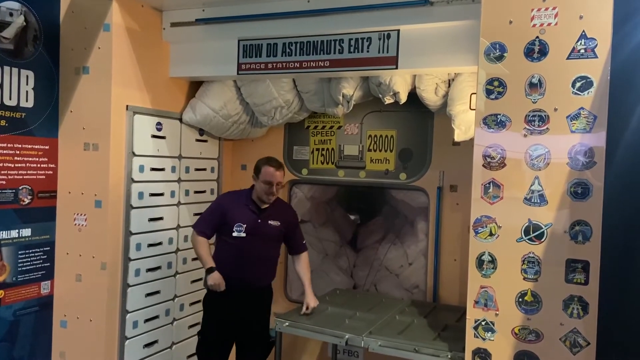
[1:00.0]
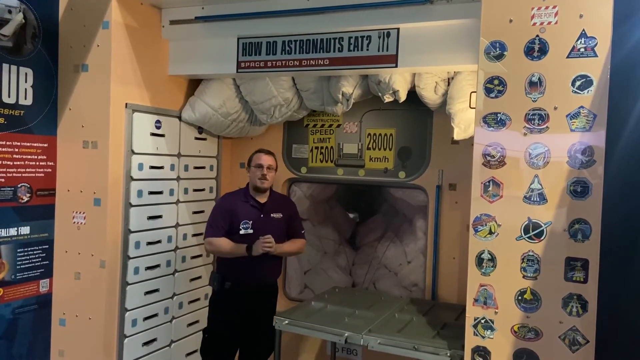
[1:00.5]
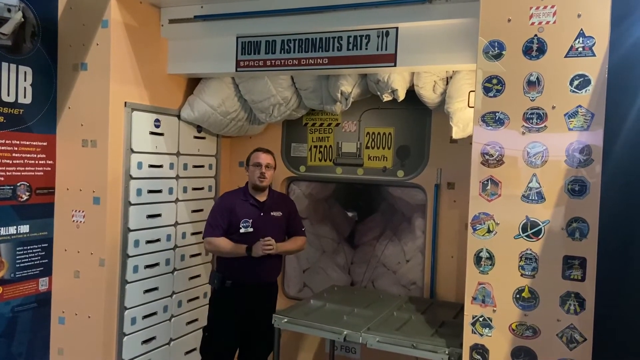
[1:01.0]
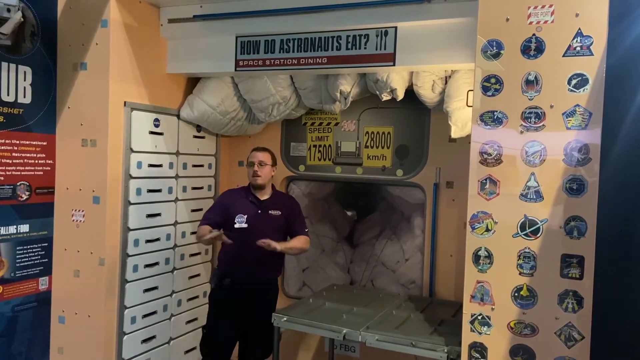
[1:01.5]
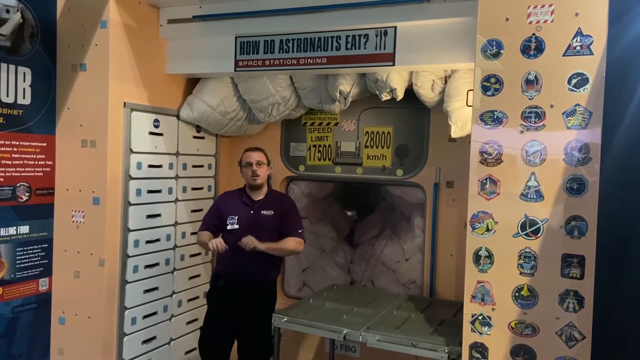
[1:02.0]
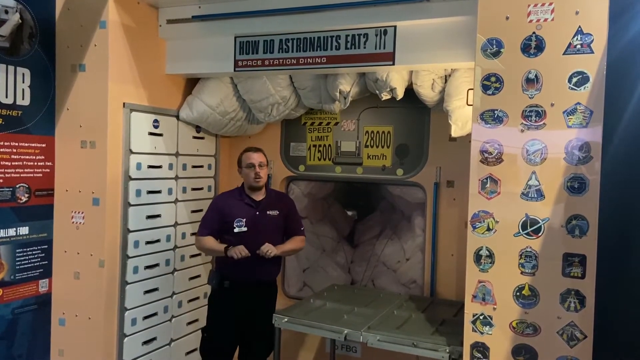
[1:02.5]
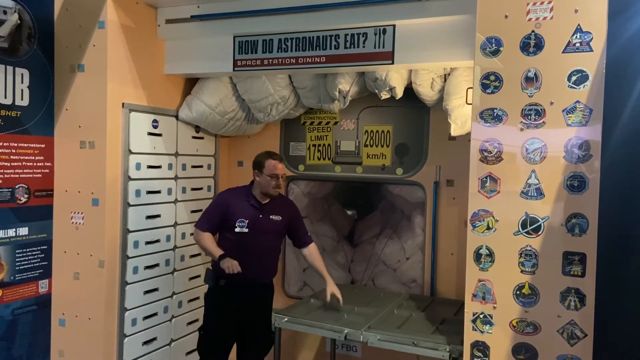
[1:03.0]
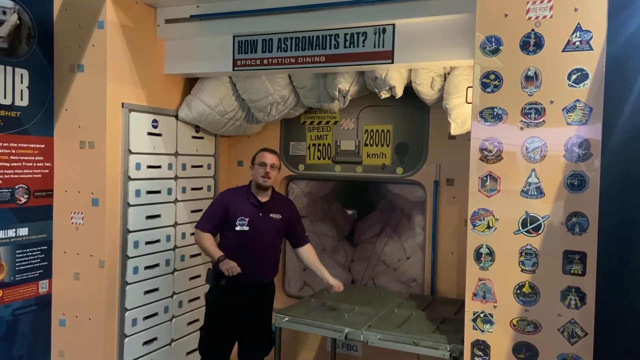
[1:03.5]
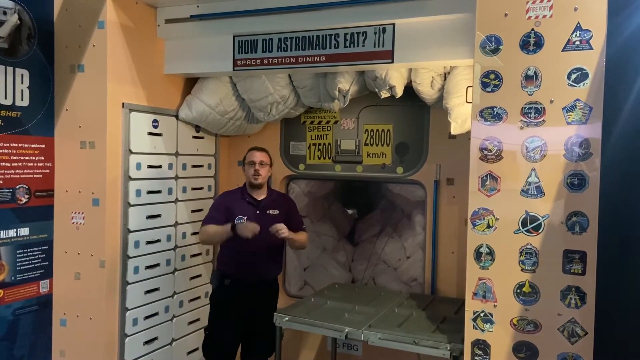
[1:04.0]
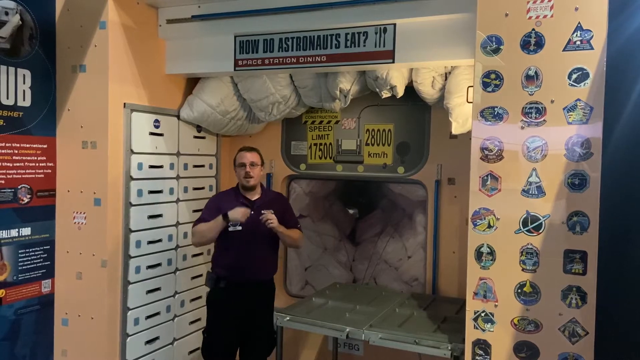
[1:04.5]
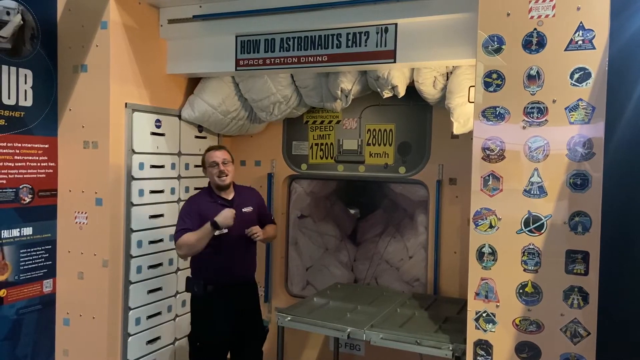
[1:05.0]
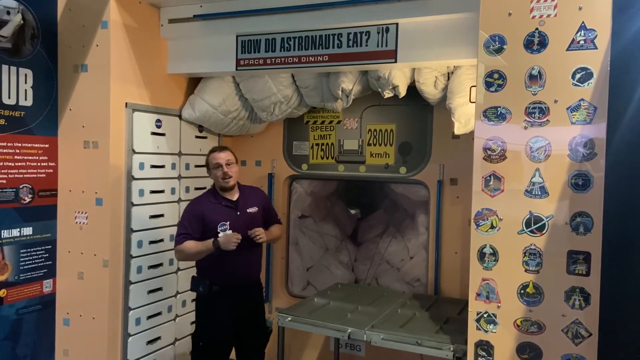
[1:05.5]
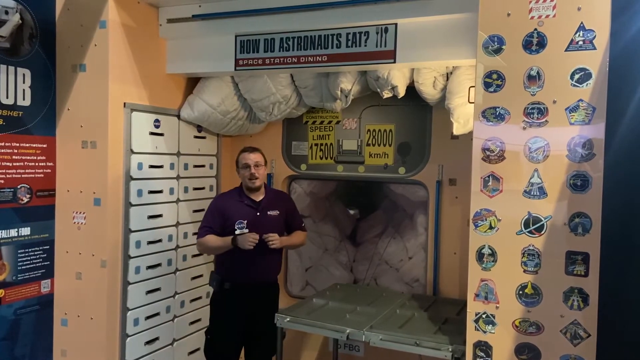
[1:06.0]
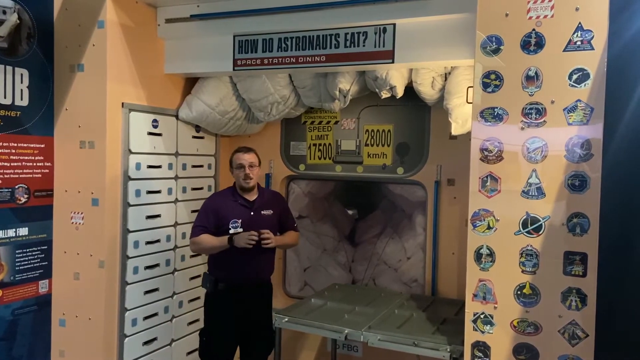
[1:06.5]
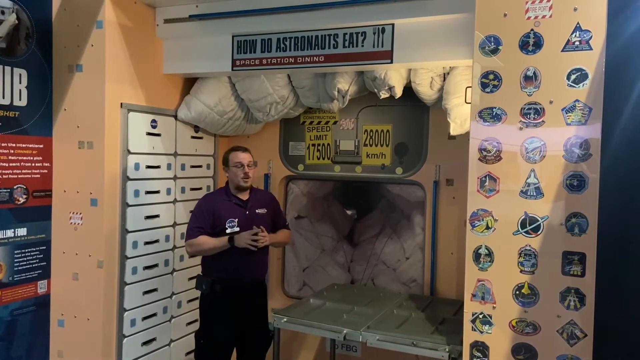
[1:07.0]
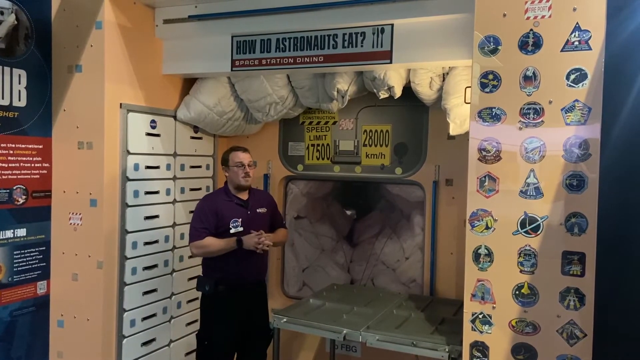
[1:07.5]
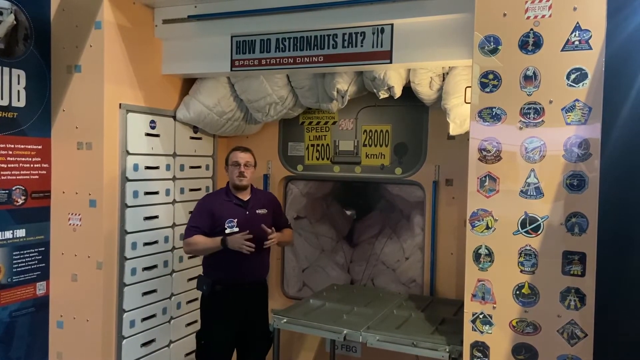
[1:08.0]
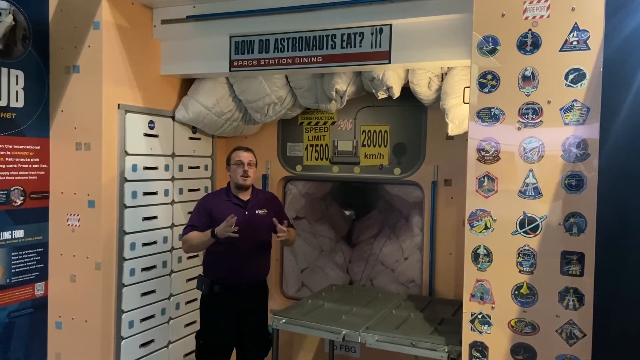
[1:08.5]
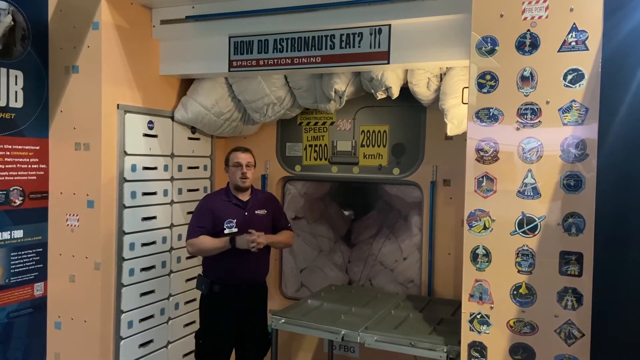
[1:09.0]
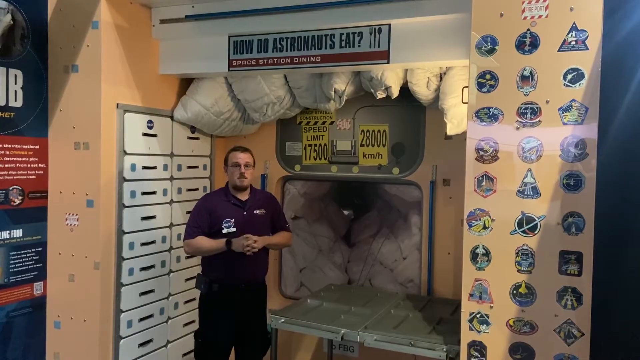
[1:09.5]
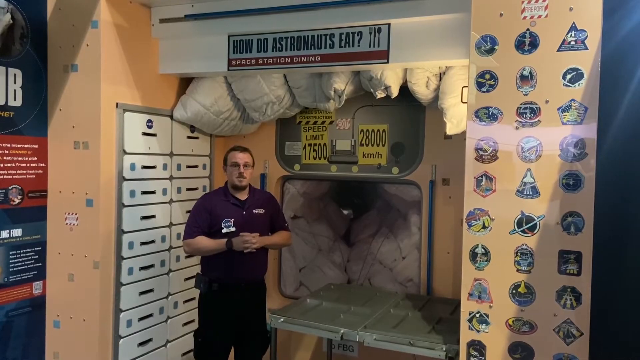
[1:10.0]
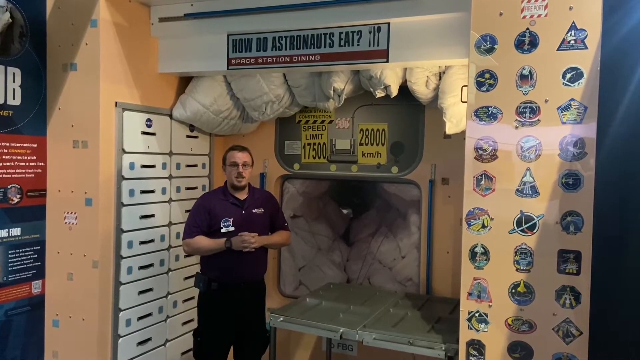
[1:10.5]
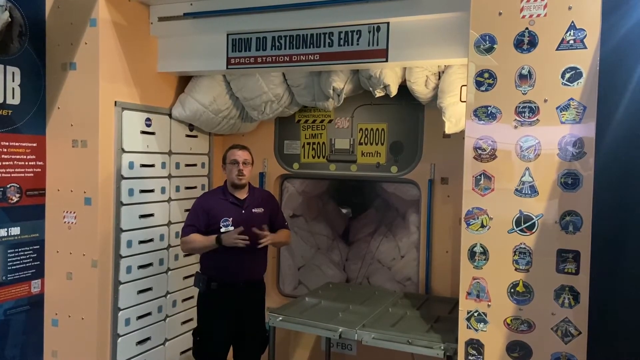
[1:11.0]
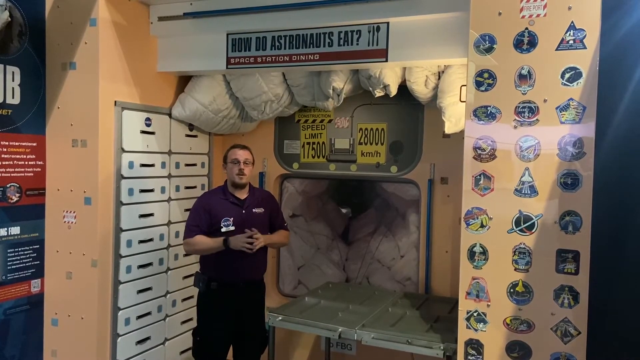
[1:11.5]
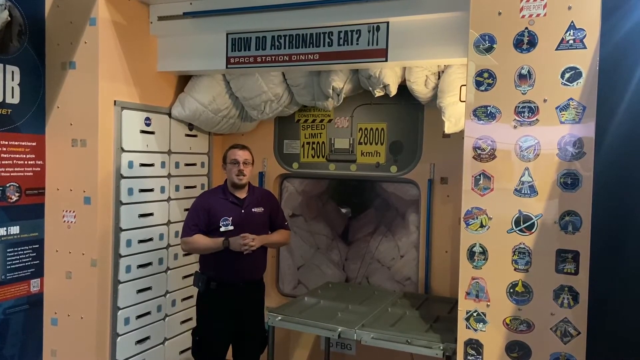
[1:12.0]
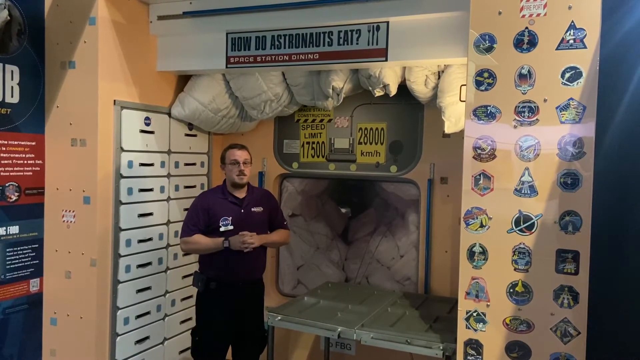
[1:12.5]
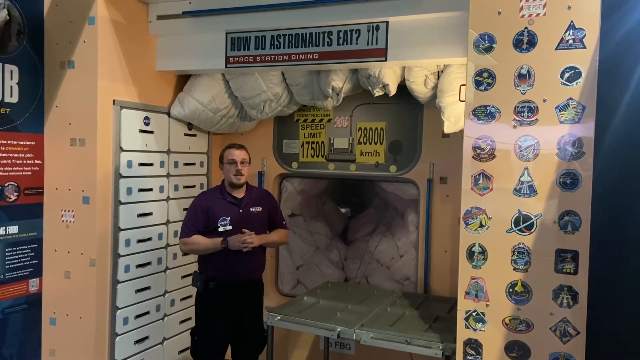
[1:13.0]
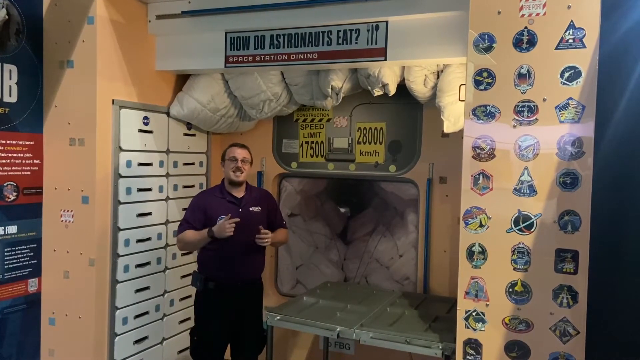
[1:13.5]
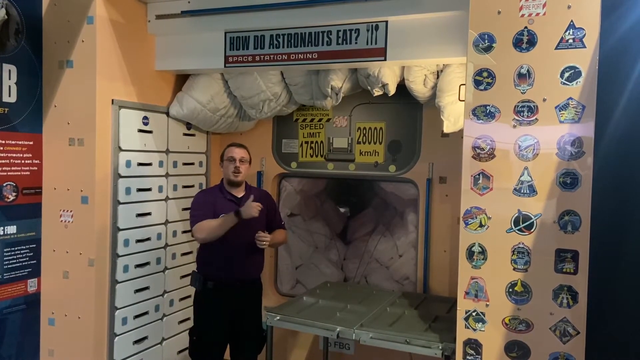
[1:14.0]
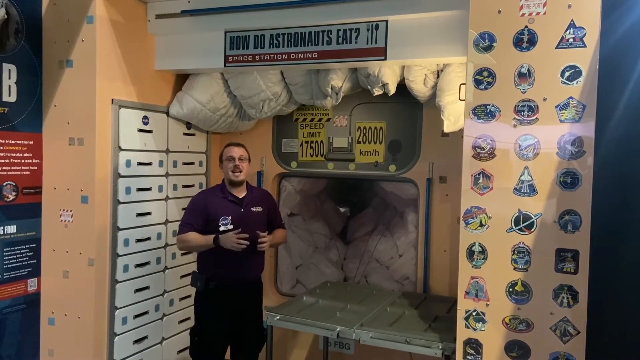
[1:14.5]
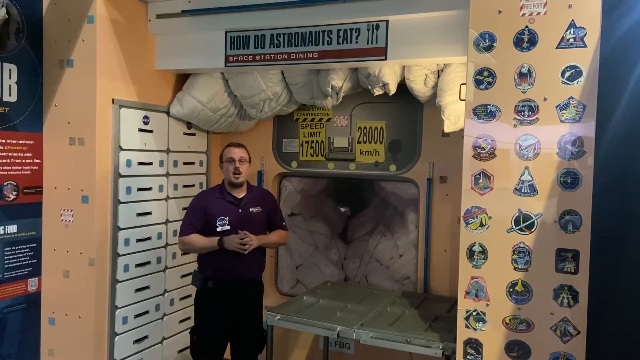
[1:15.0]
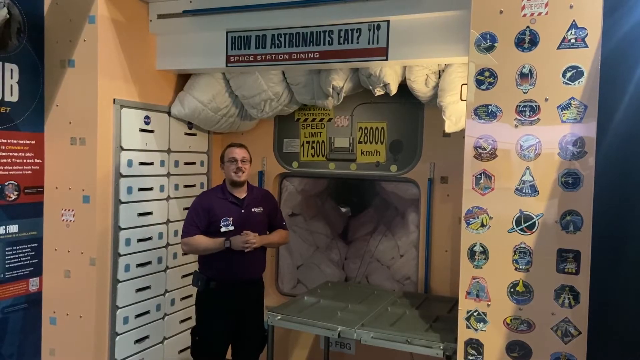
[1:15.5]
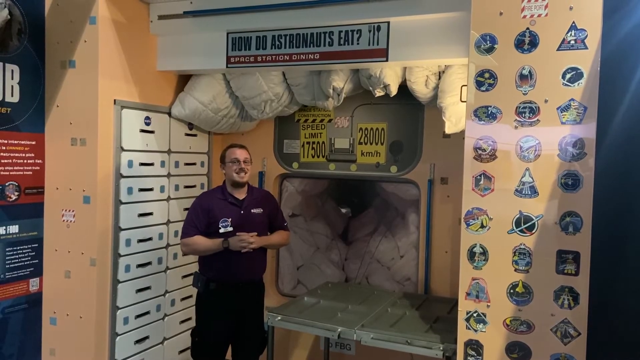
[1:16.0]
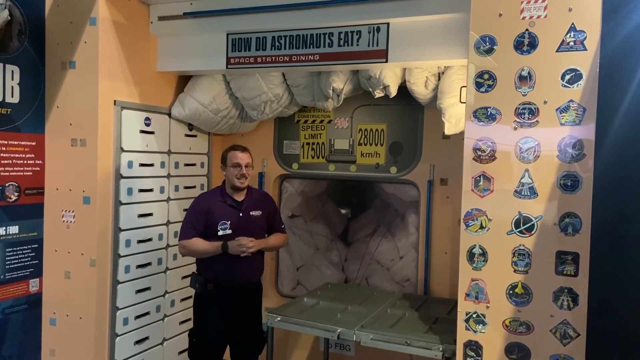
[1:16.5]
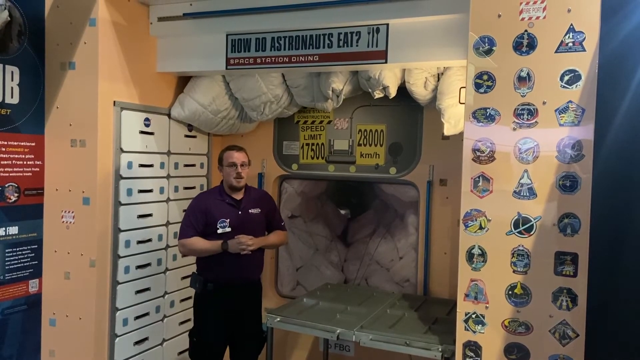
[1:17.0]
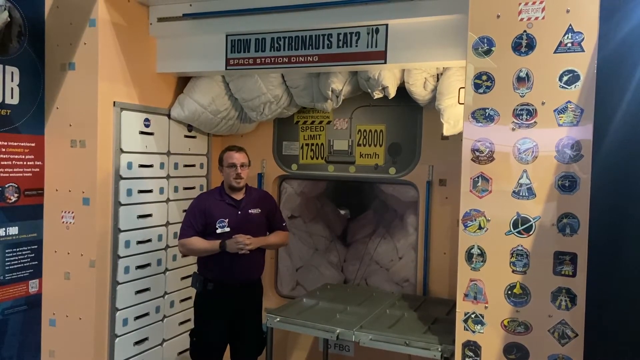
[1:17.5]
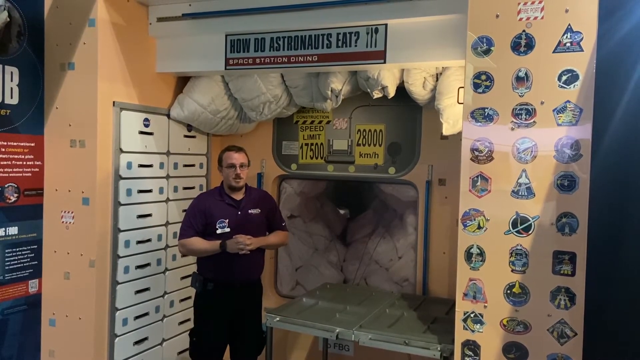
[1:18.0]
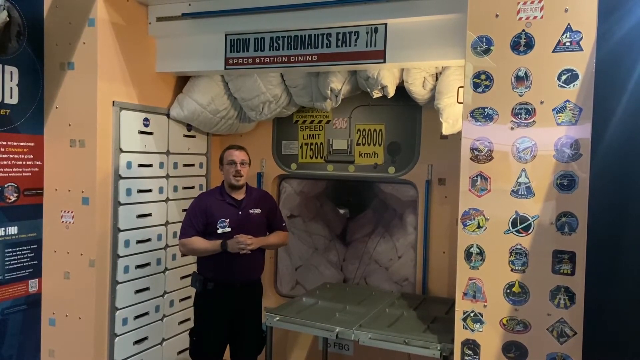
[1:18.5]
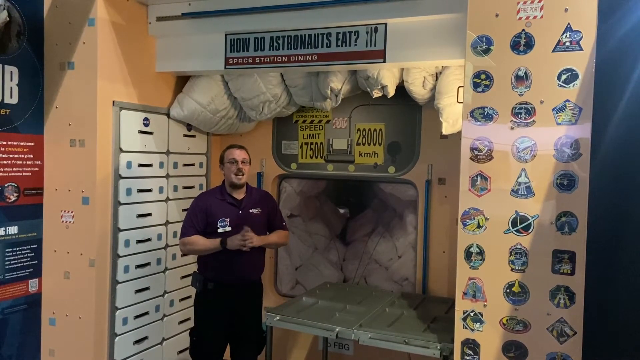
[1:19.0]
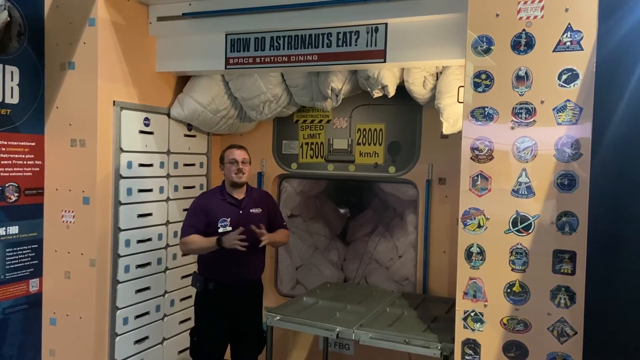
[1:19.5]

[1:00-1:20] The man keeps talking. In front of him is some sort of odd, small, green table. Its surface is clearly not flat and has a lot going on; there seem to be little tabs on it. Behind him are numbers: "17,500," apparently labelled as a limit, and "28,000" kilometers per hour.